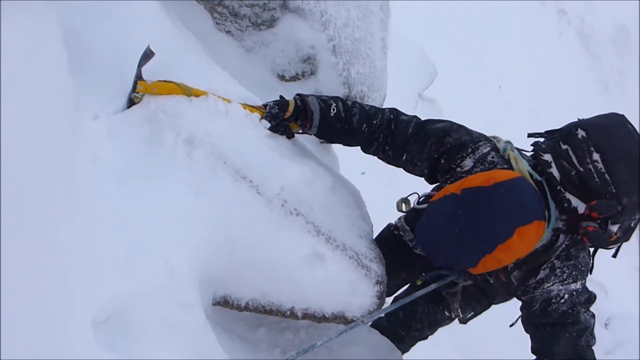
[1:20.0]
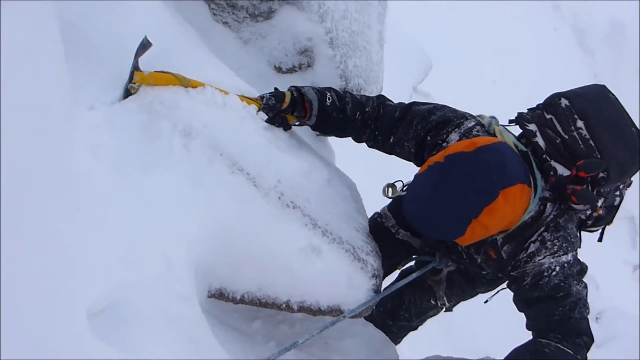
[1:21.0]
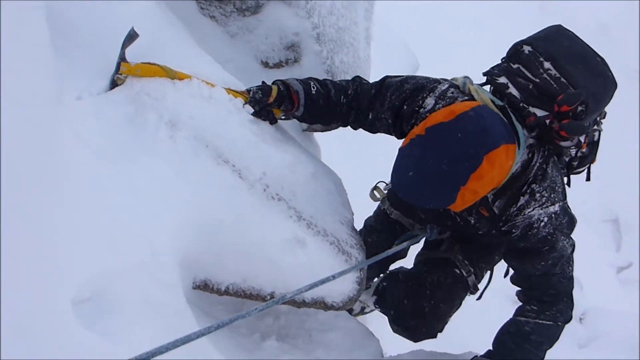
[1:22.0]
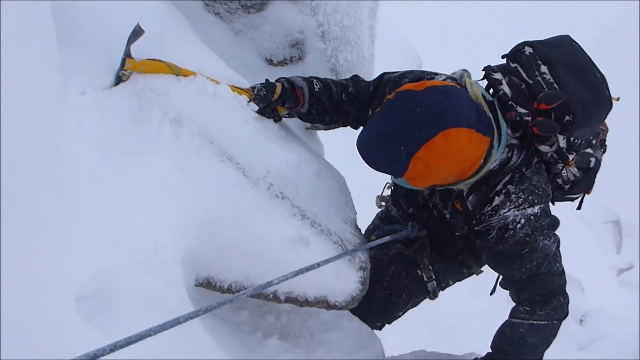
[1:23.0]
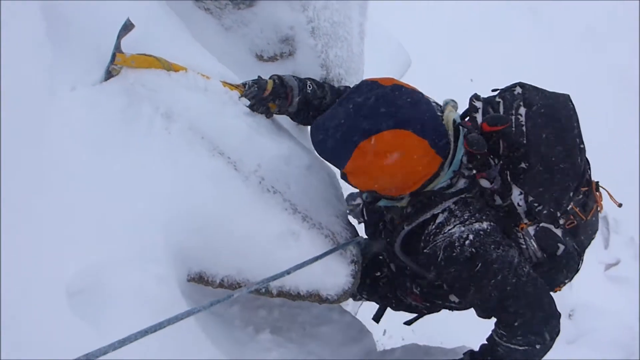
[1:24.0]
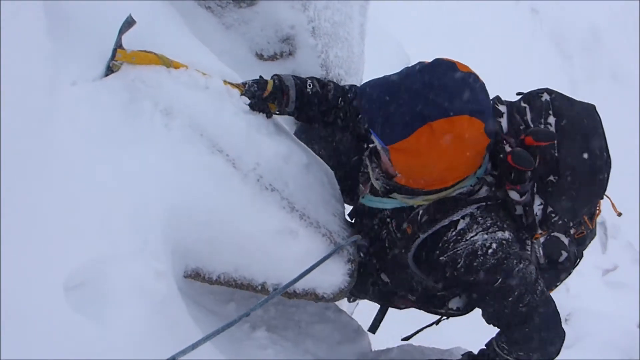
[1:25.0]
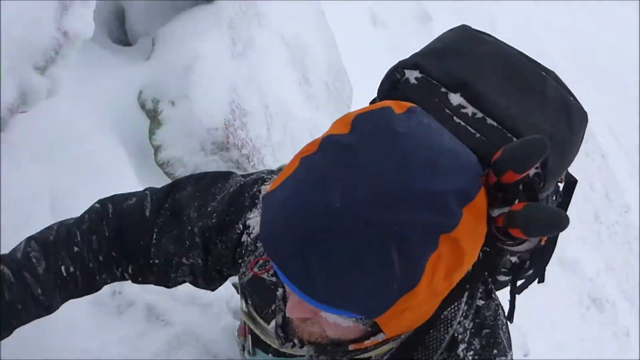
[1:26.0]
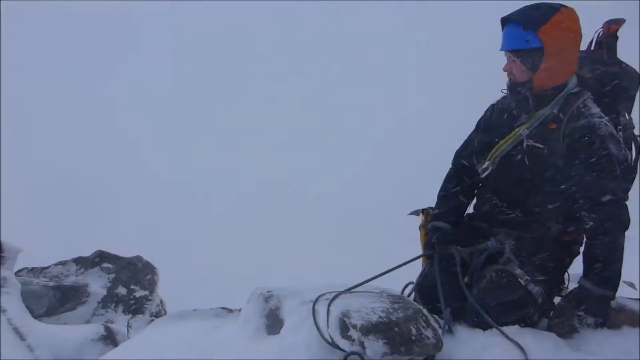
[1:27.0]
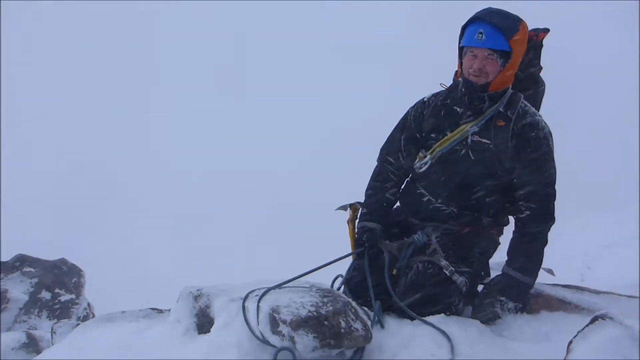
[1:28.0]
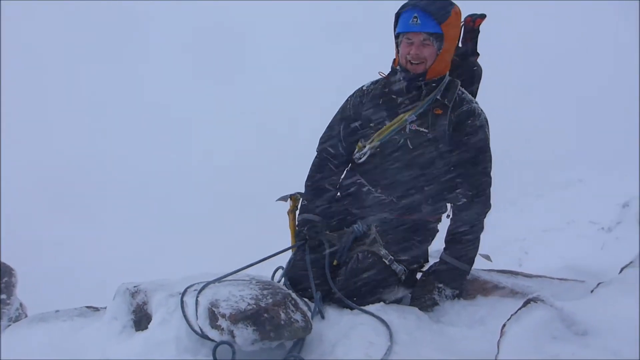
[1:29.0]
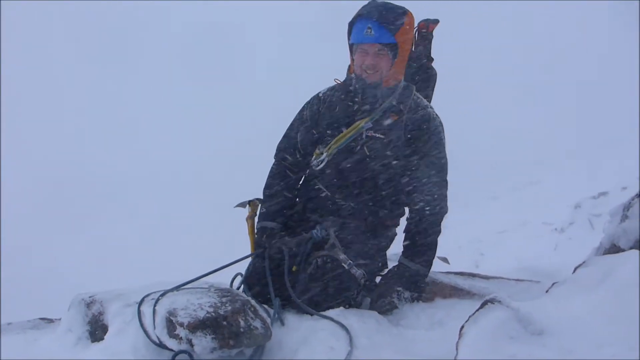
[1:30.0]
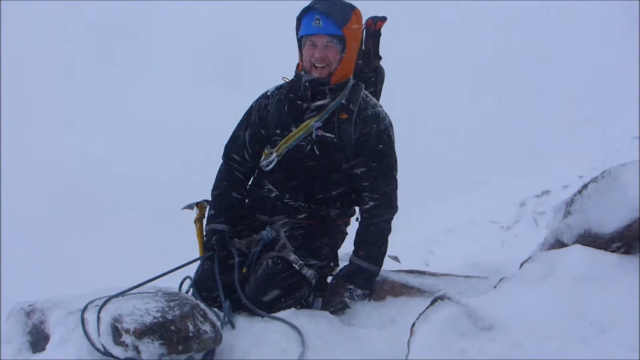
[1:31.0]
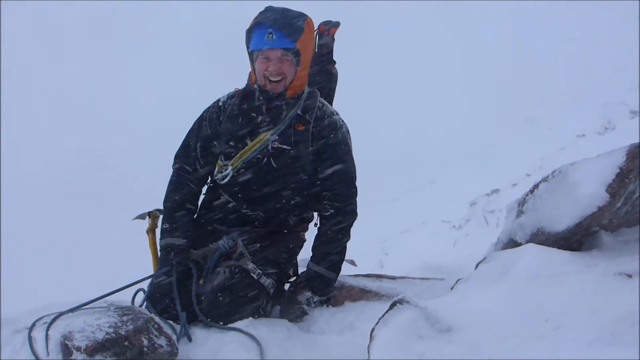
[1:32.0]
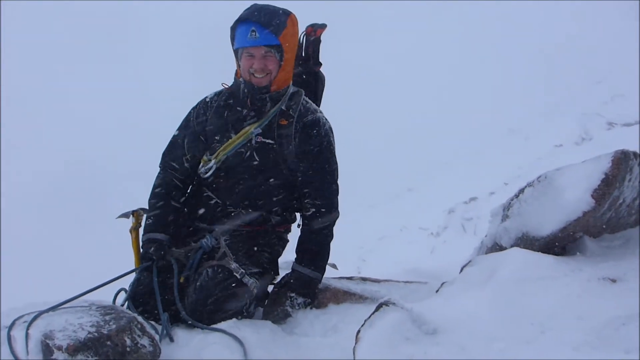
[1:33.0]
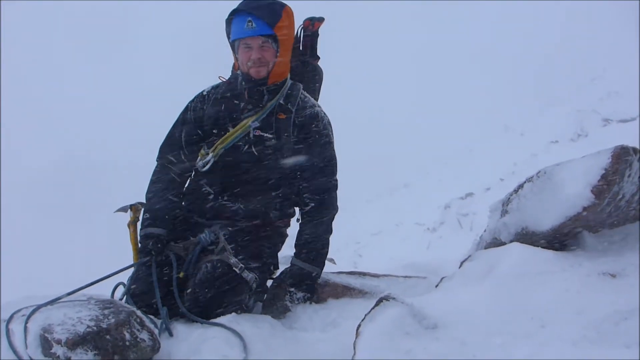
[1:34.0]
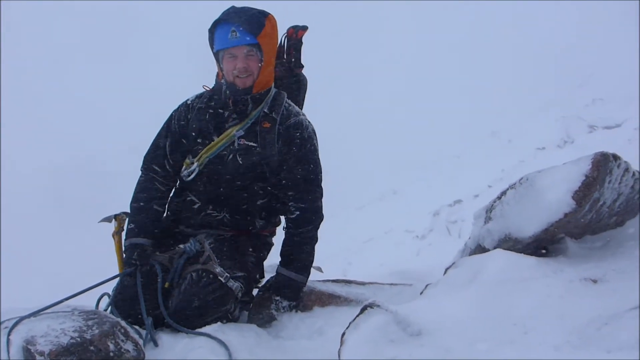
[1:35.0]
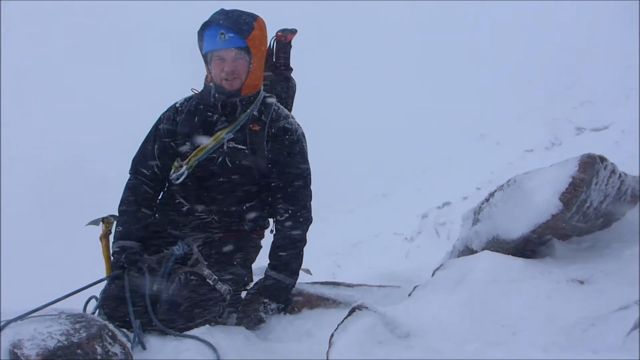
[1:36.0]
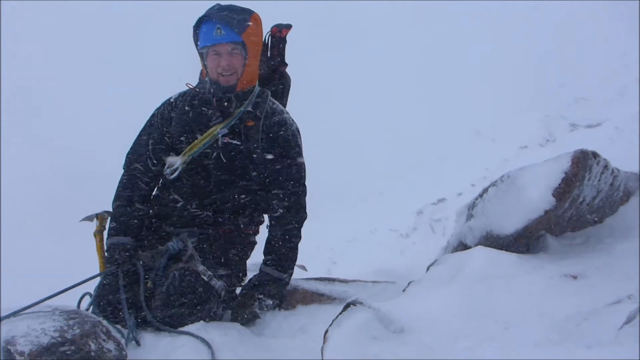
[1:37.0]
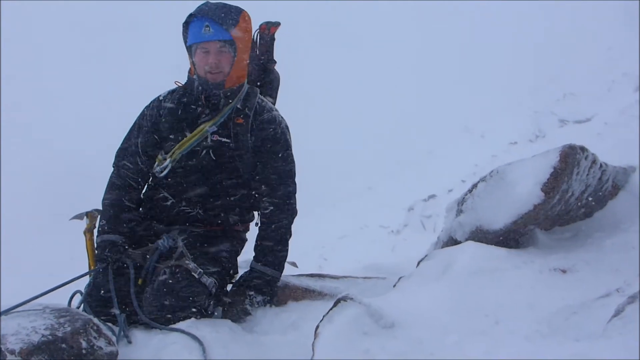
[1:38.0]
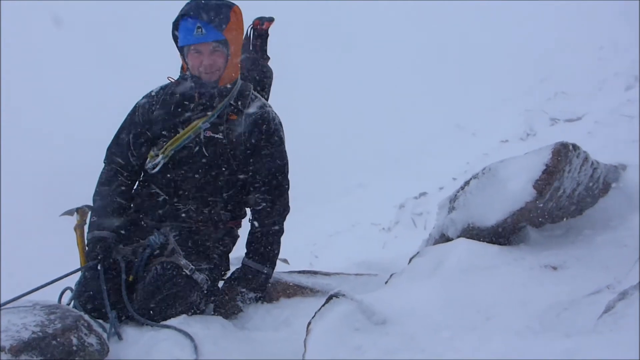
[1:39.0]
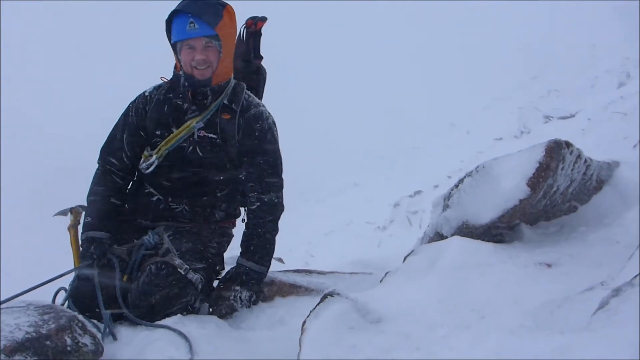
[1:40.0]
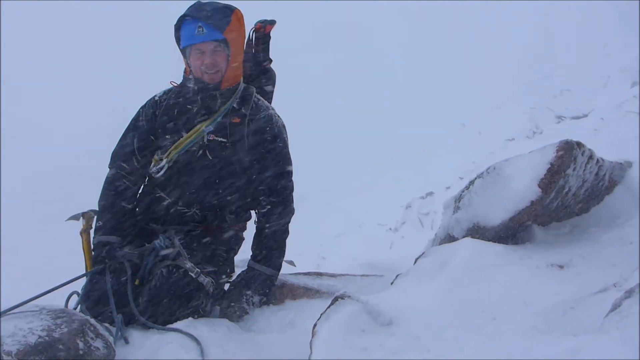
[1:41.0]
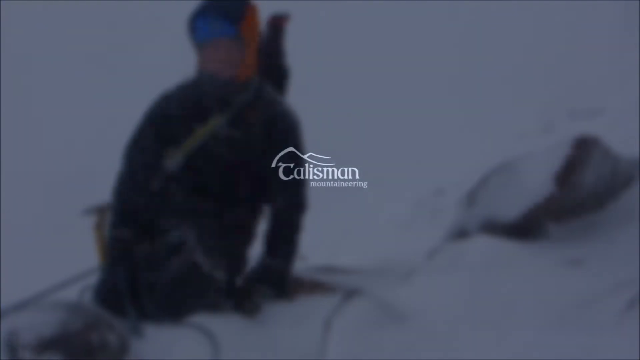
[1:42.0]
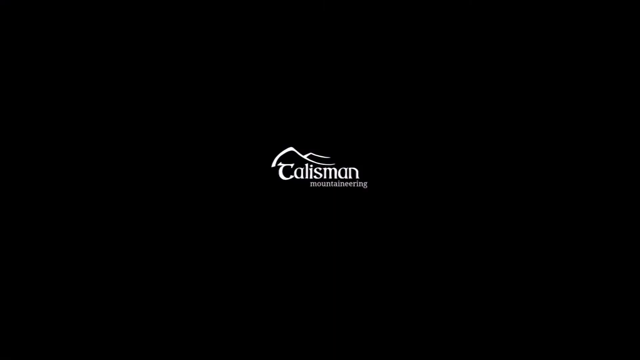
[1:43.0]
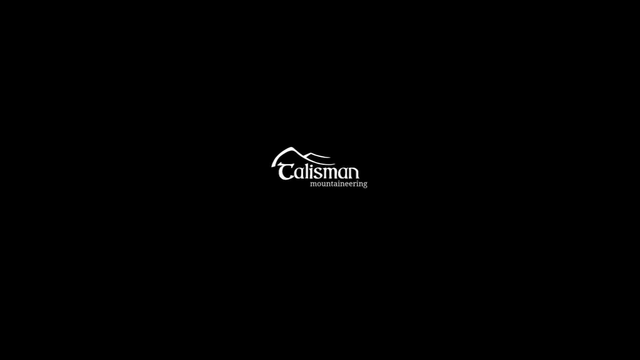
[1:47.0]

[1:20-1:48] The climber tries to position his feet and legs; his legs move and he looks down at them as if trying to get traction. He then moves closer to the camera, and a zoomed-out view shows him standing toward the right, looking at the camera and speaking, his head moving up and down slightly. It is still snowing, with the snow moving parallel to the ground. The camera pans slightly toward the right, showing some rocks on his right-hand side. The screen then very slowly goes black, and white text appears in the middle of the screen, apparently reading "Calisman." This logo stays in the center of the screen until the video ends.